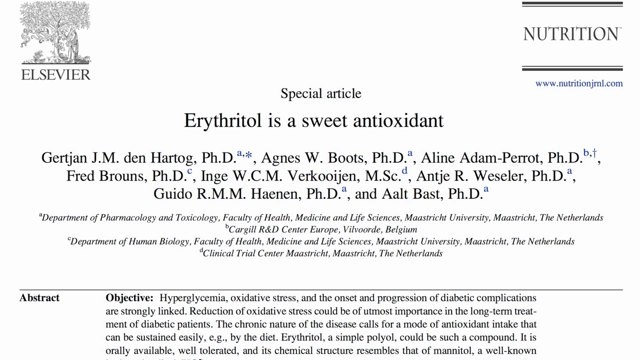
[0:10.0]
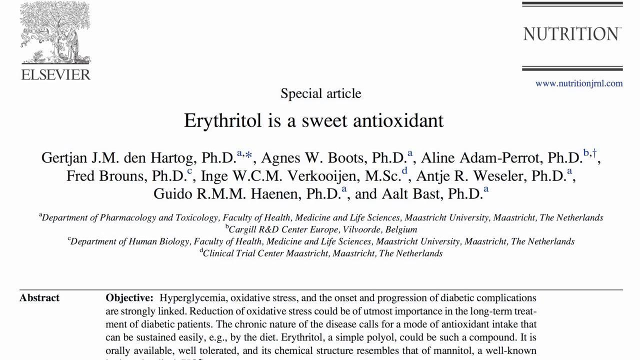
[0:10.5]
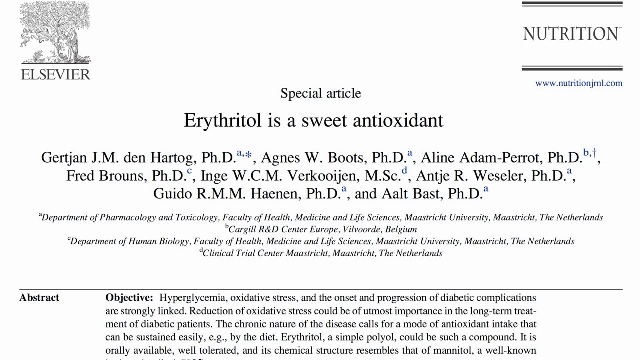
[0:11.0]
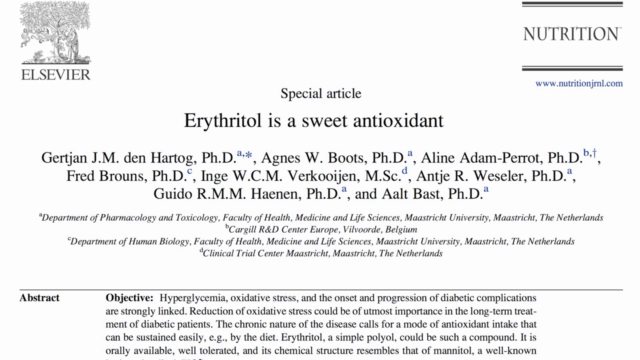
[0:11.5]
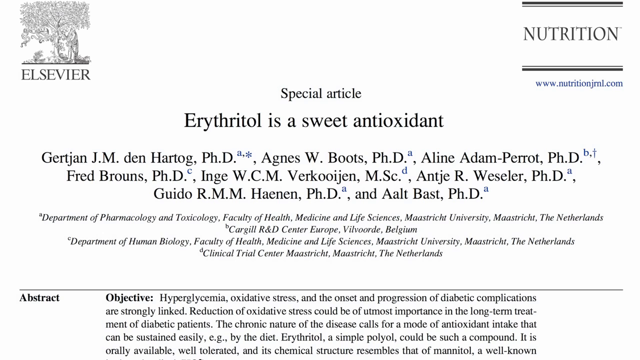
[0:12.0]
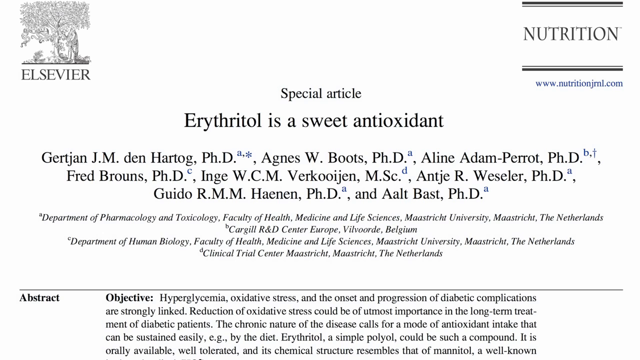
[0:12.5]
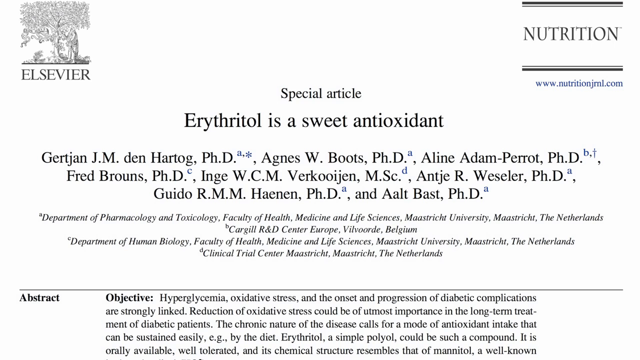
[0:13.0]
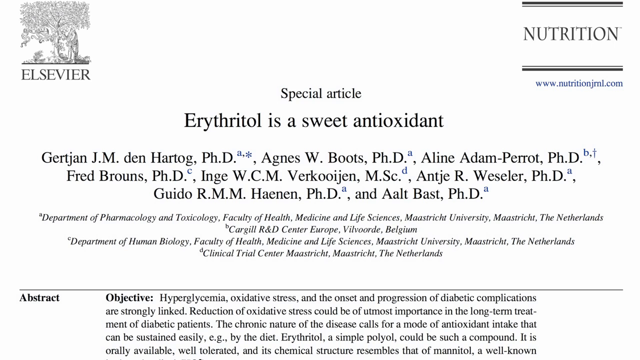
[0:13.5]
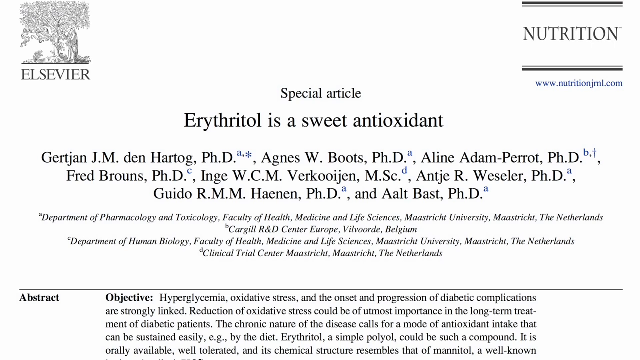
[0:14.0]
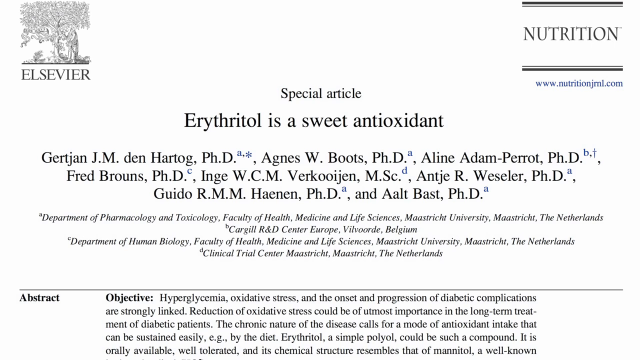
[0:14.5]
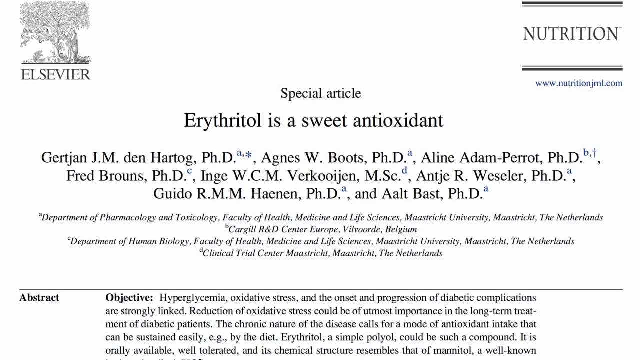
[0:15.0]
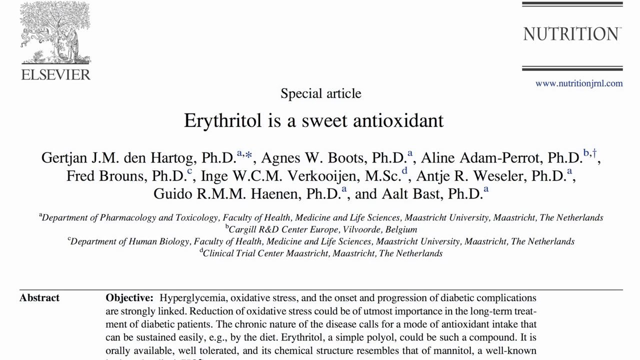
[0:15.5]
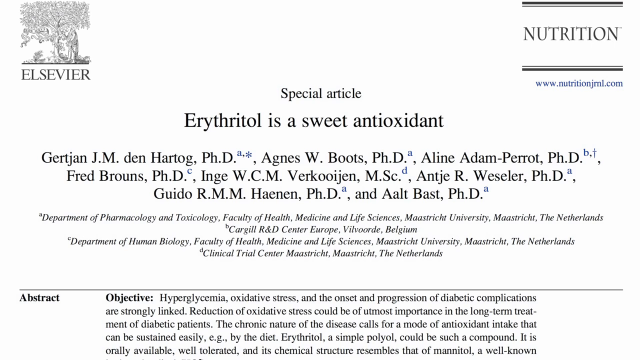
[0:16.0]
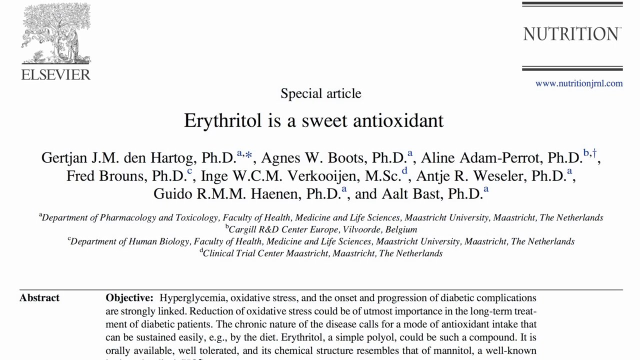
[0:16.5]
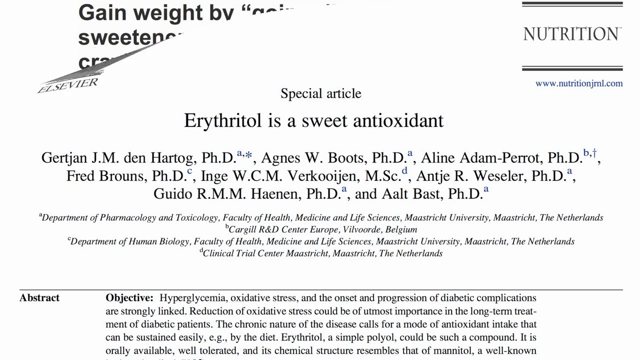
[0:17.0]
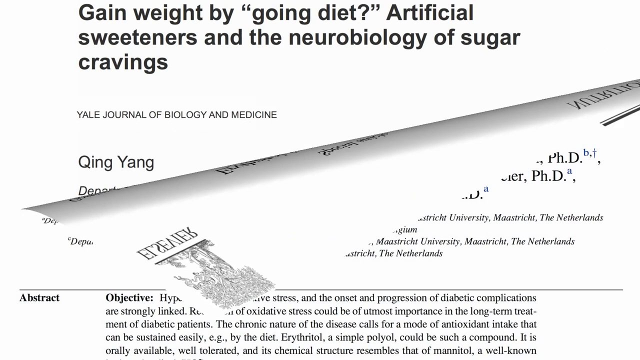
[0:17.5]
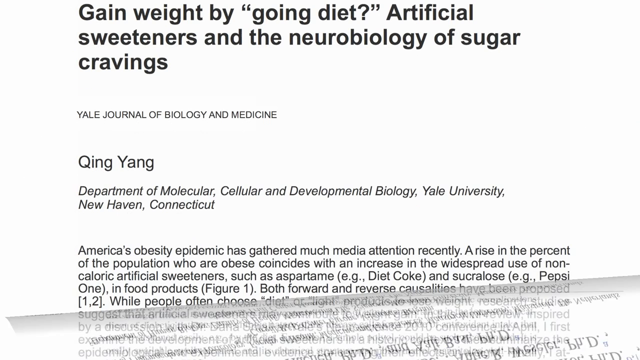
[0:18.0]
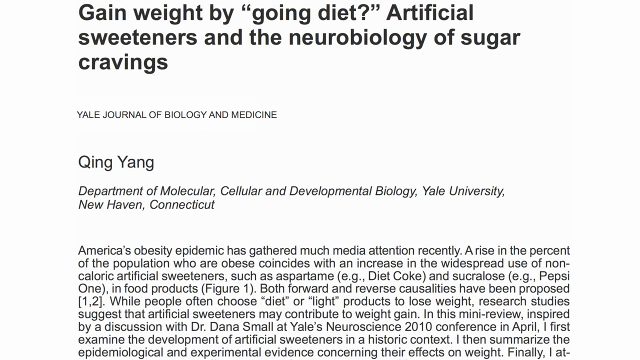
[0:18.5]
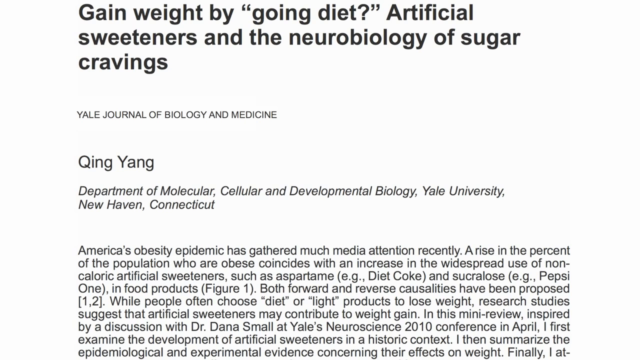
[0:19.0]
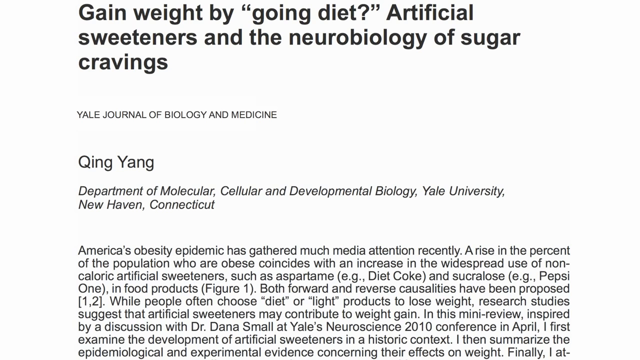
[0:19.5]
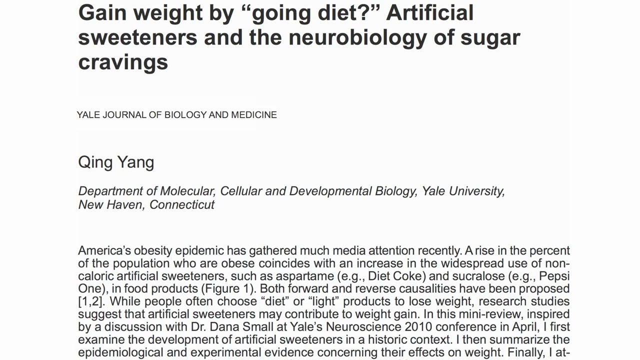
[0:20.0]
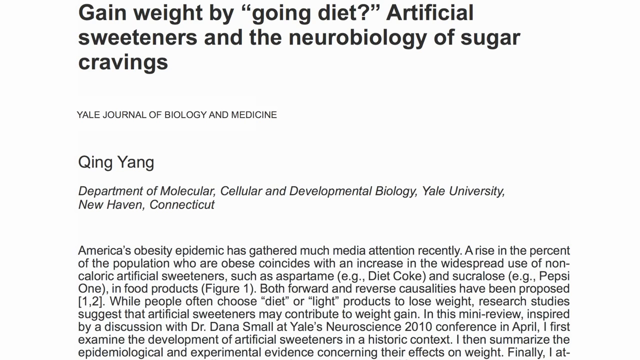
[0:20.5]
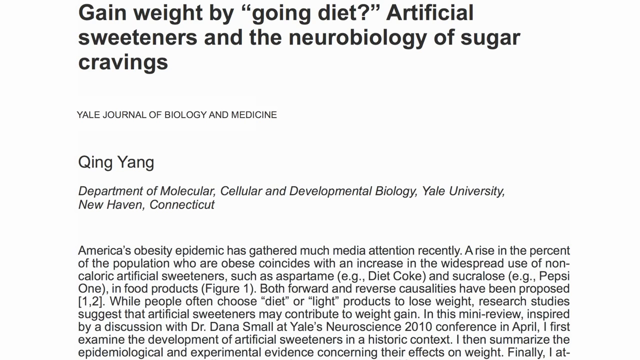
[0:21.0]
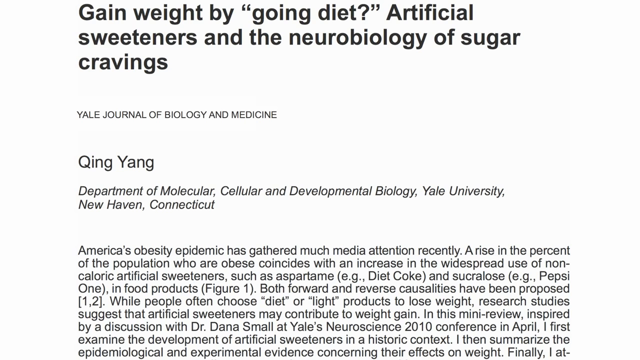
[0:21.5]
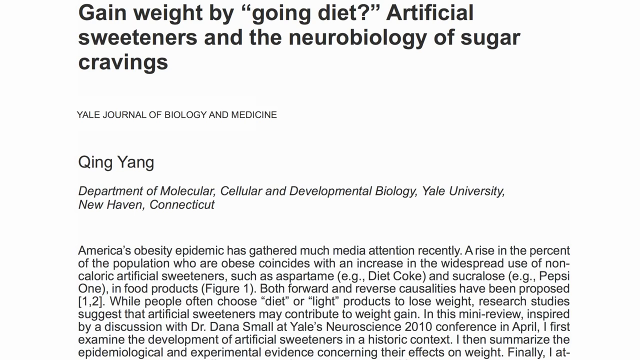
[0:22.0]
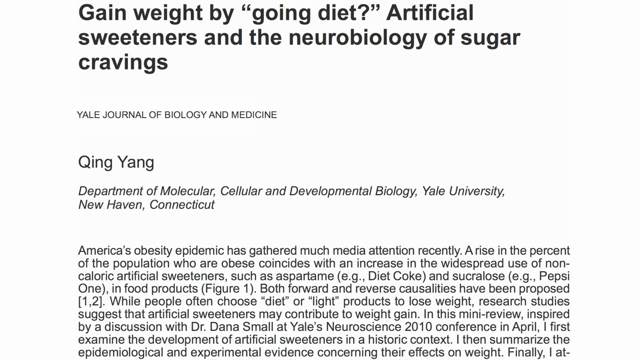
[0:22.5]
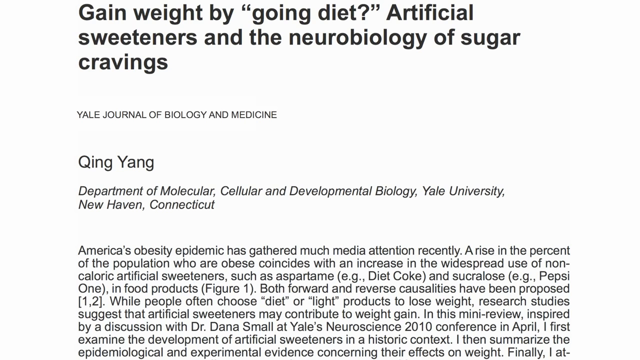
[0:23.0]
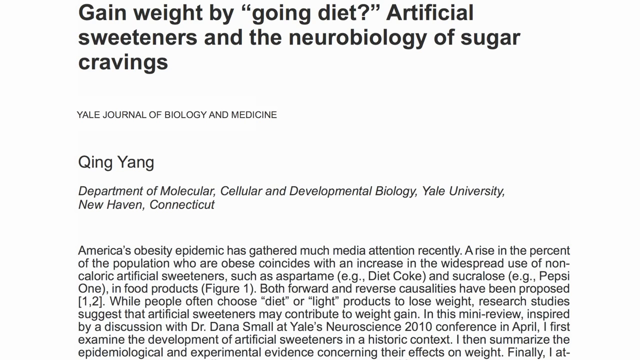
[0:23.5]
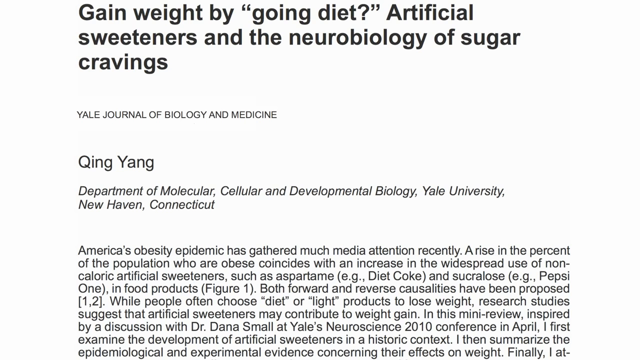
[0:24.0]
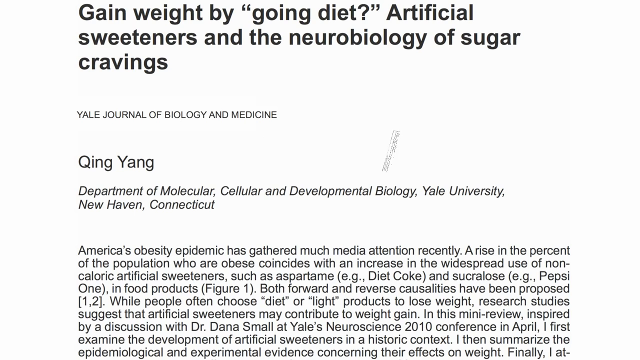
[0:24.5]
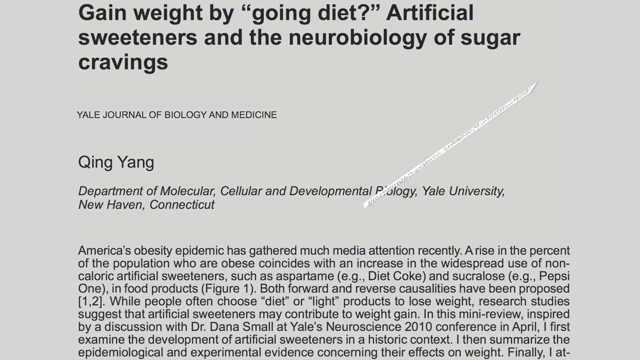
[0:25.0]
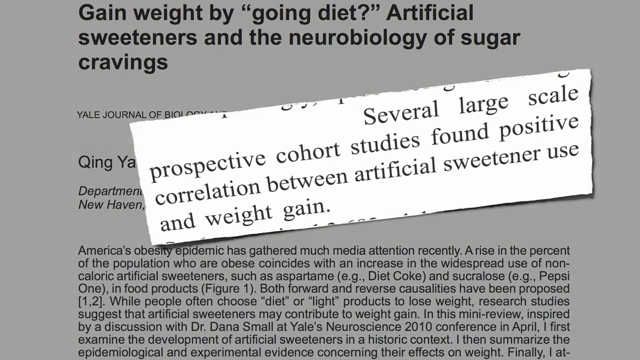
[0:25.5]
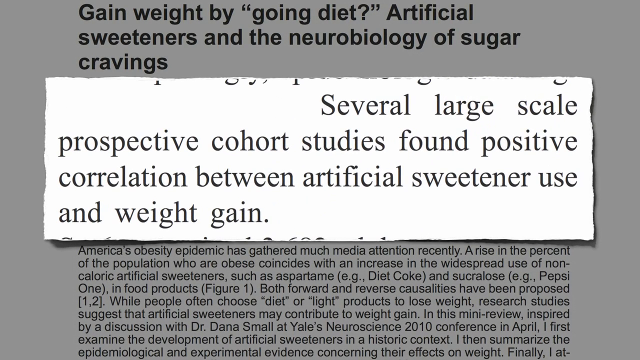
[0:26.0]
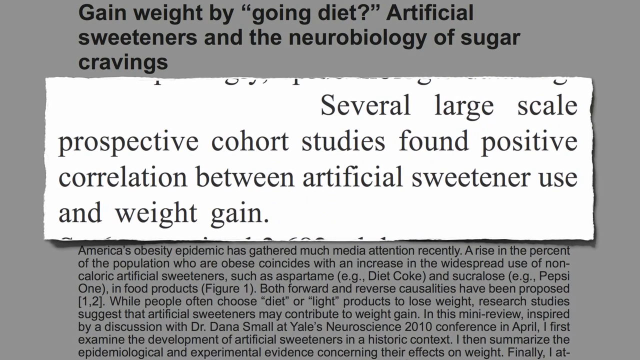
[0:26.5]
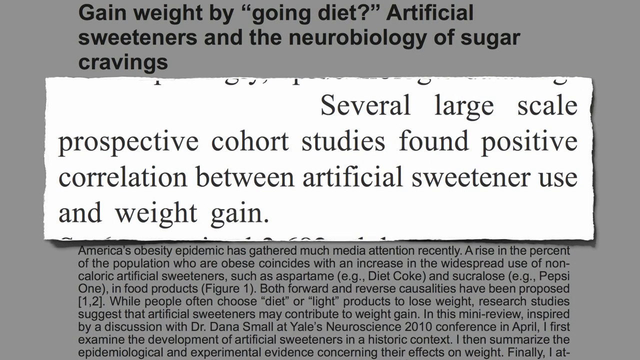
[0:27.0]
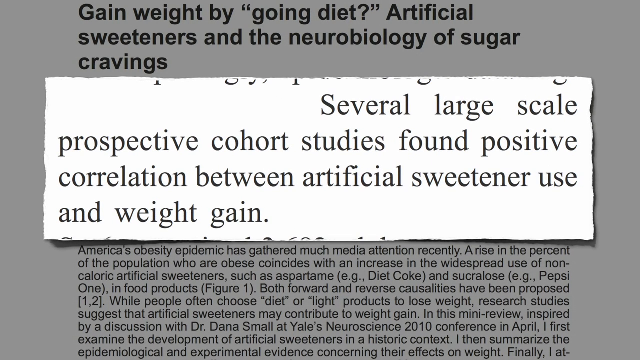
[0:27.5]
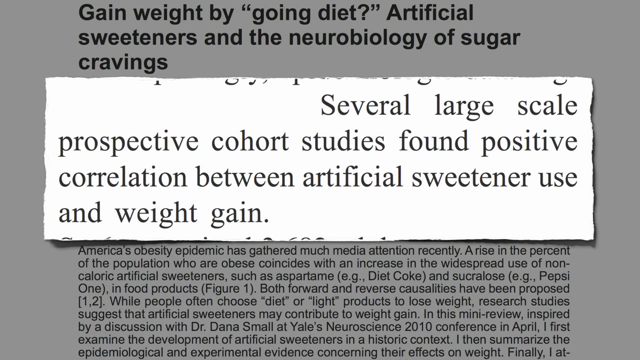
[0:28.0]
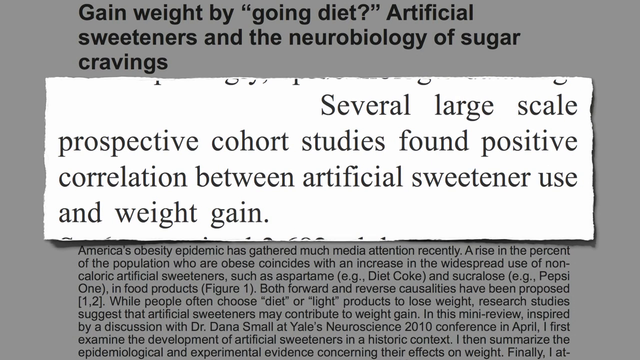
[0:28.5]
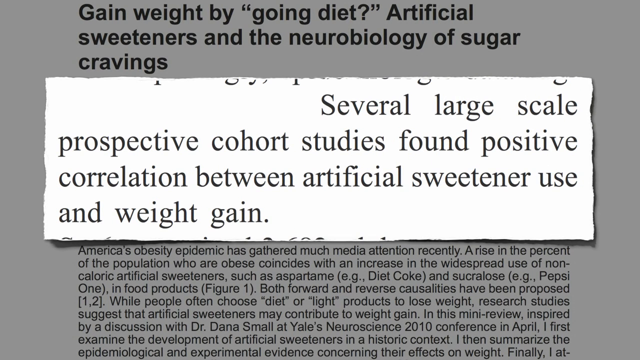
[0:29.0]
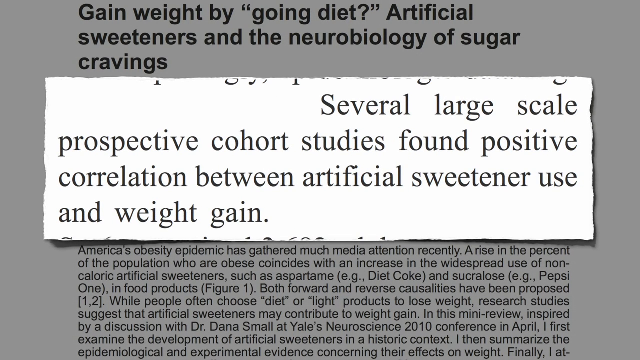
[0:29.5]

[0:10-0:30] The heading of the article about erythritol as a sweet antioxidant remains in view, with its authors listed as PhDs and other highly qualified people. A swiping effect then brings up an entirely different article, titled "Gain weight by going diet, artificial sweeteners, and the neurobiology of sugar cravings." It was published in the Yale Journal of Biology and Medicine and written by Qing Yang (spelled Q-I-N-G) of the Department of Molecular Cellular and Developmental Biology at Yale University. The abstract states that America's obesity epidemic has gathered much media attention recently. It also states that a rise in obese people coincides with an increase in the widespread use of non-caloric artificial sweeteners. According to the abstract, several large-scale prospective cohort studies found a positive correlation between artificial sweetener use and weight gain. The words "metabolic syndrome" have not yet appeared.